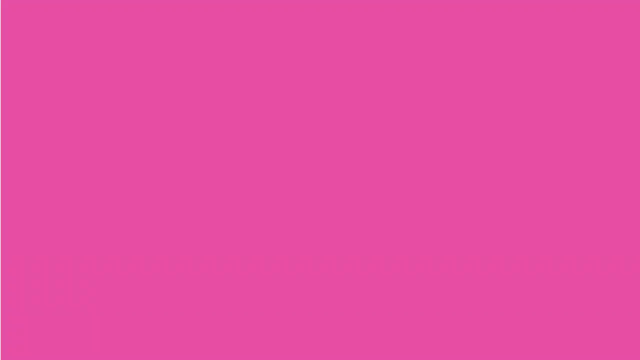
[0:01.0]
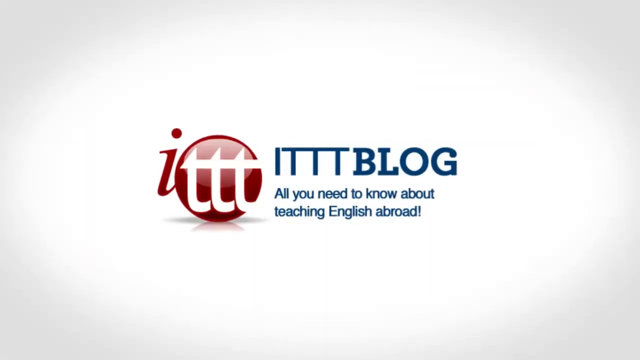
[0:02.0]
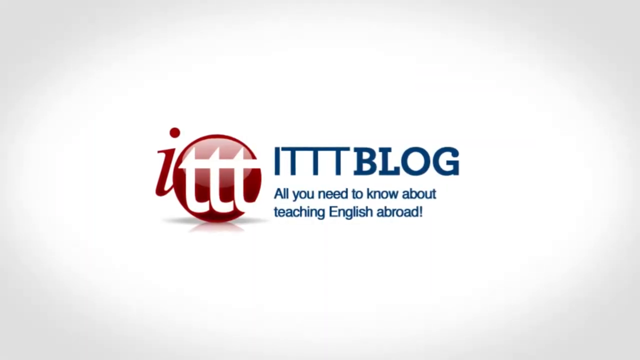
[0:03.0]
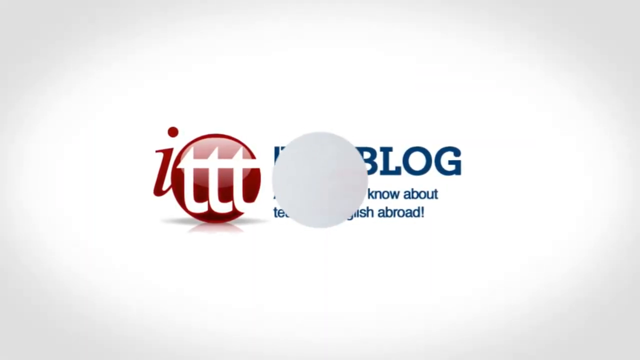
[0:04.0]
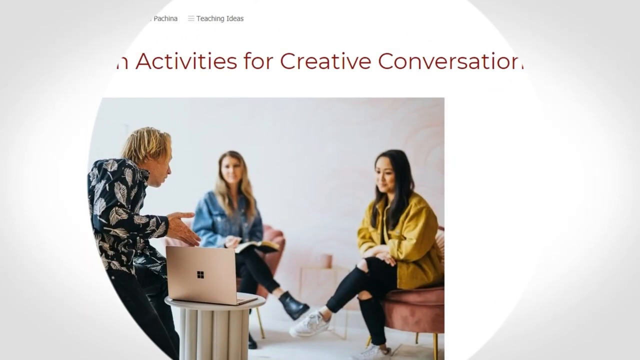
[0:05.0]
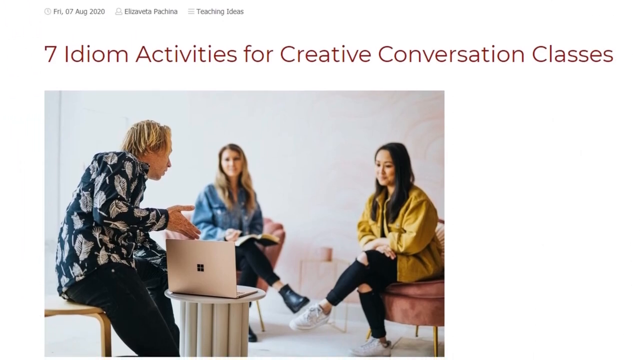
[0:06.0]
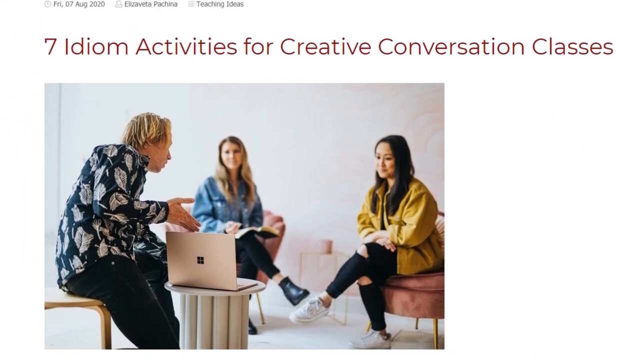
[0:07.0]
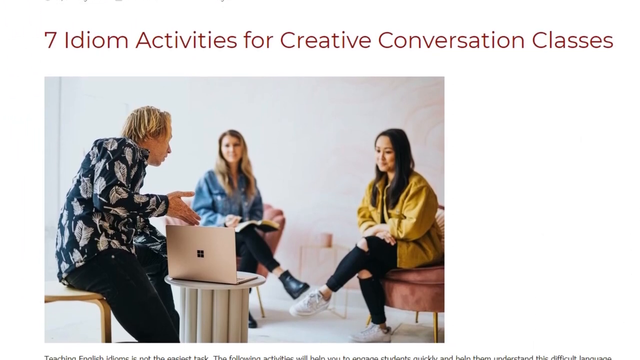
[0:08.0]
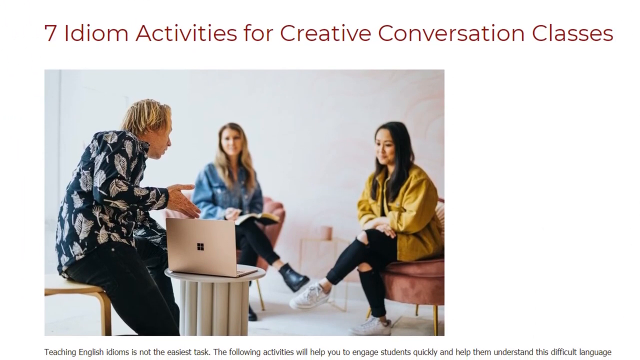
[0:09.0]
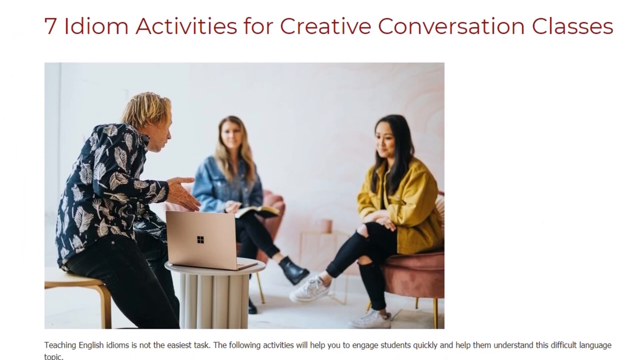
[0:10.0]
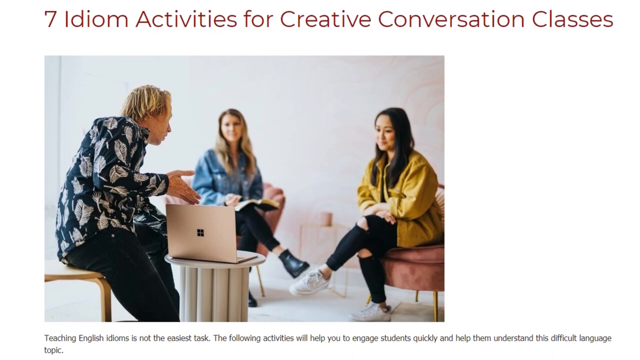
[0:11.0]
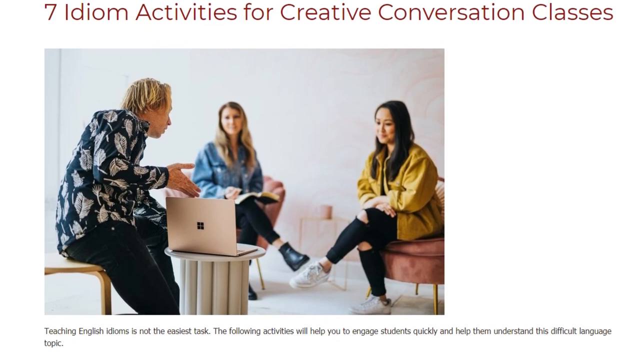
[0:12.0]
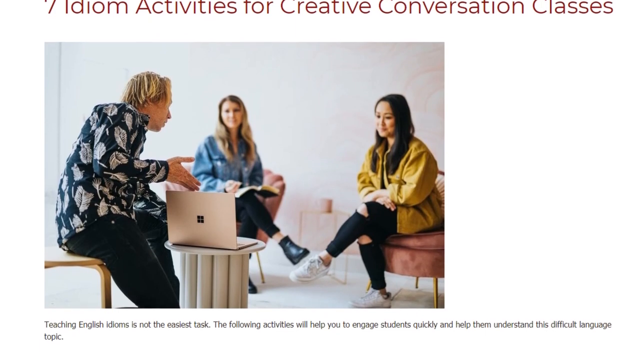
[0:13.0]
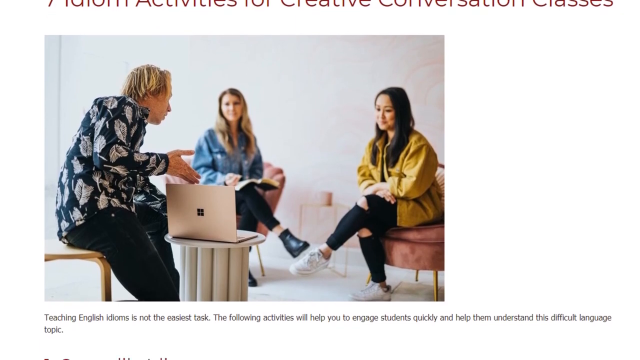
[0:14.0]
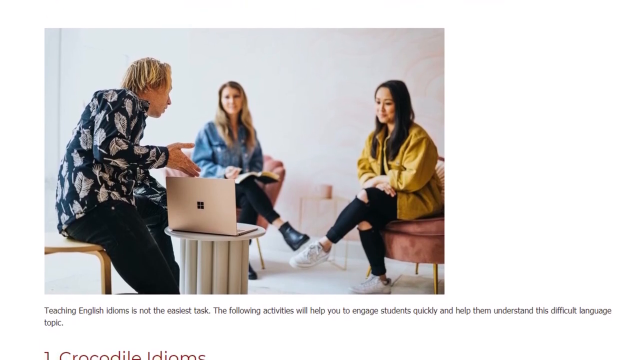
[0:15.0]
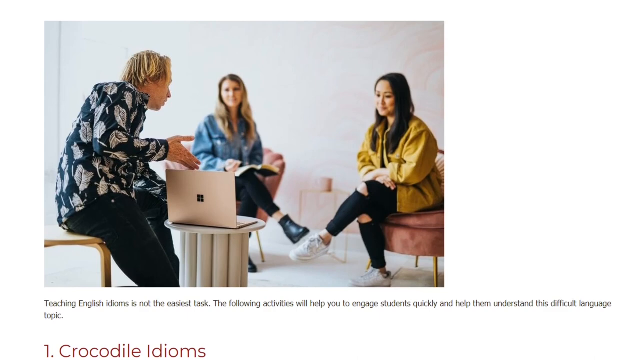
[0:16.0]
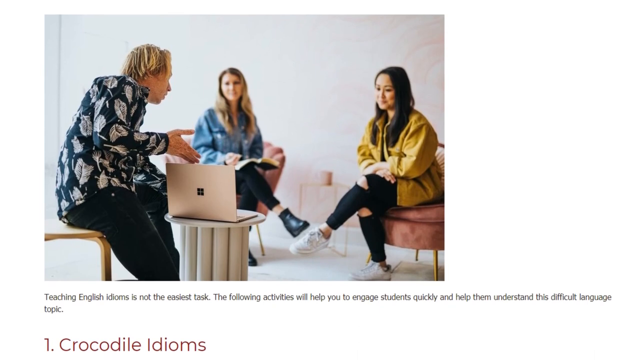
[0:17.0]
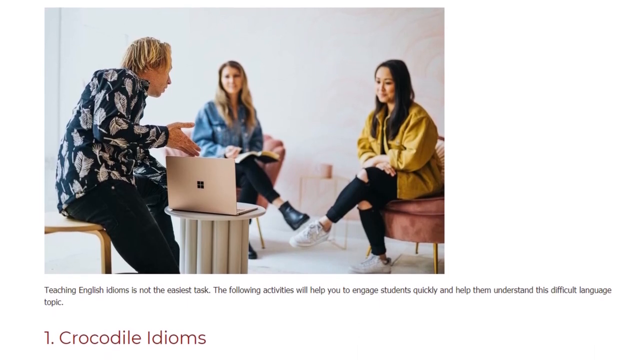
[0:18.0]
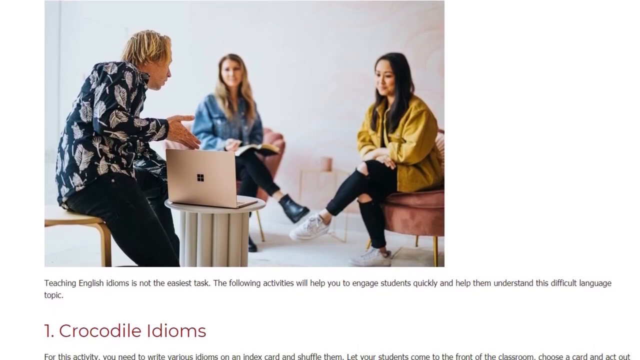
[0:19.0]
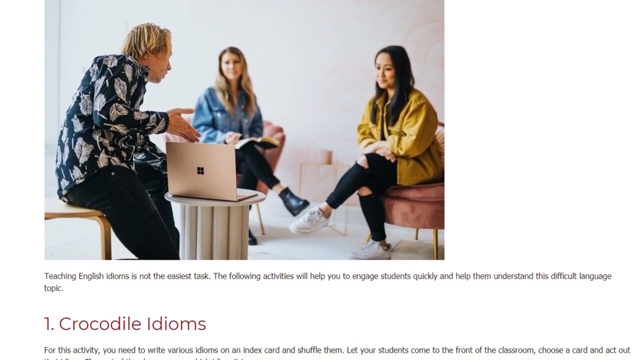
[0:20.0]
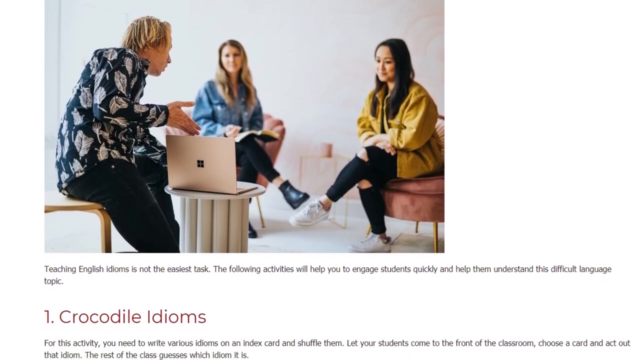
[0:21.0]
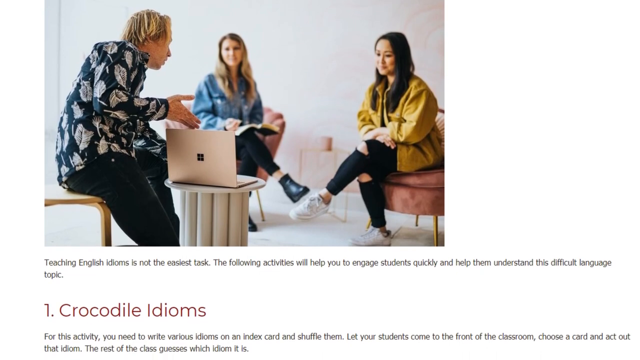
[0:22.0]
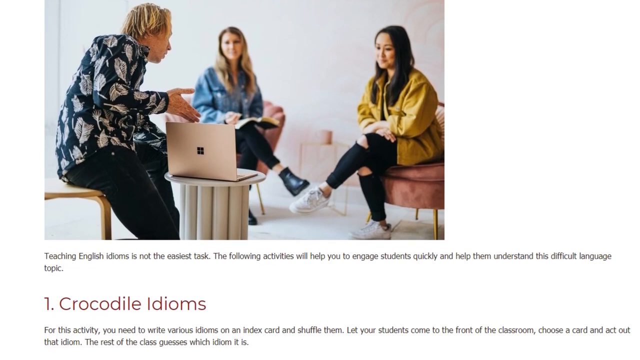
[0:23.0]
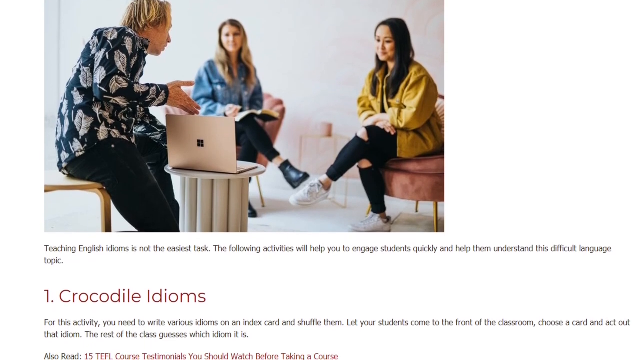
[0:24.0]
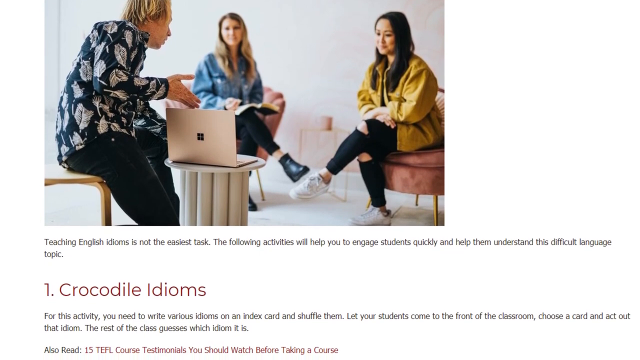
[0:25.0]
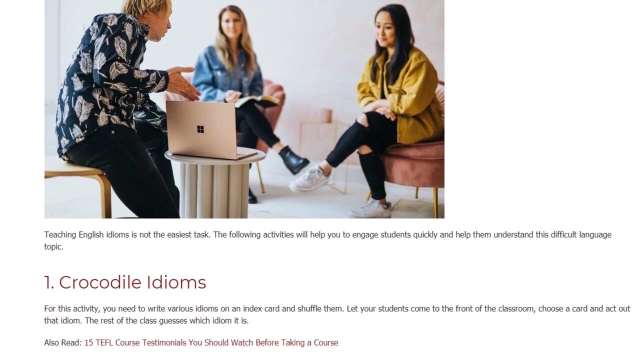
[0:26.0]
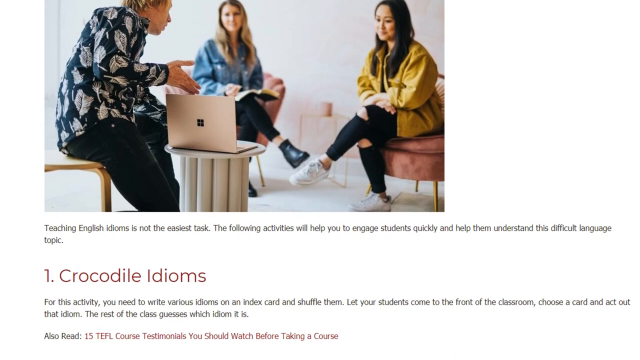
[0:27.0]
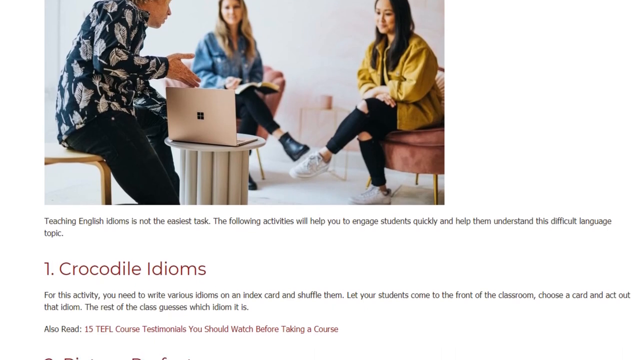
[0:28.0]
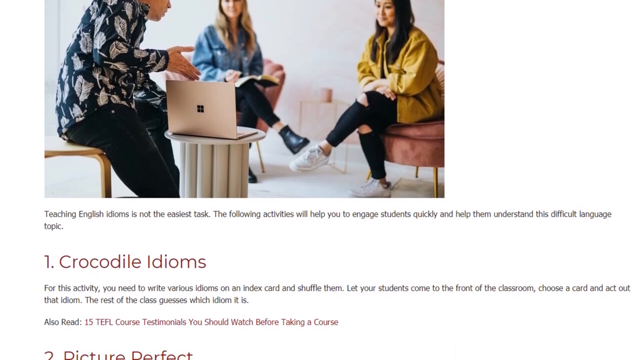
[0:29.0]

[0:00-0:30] The educational video opens with a variety of colors displaying across the screen, followed by the text "ITTT blog, all you need to know about teaching English abroad." To the left is a logo that looks like a circle with three T's on the inside and an I just outside the circle. A new screen then comes up that says "seven idiom activities for creative conversation classes." It shows a man talking to two women; the man has a laptop, sitting on top of a little round table, and he is looking at the two women, who are looking at the laptop. The woman on the right wears a yellow jacket and black pants with holes in the knees. The woman on the left wears a blue shirt, black leotards and black boots, and has a book open in front of her. As the camera pans downward, text at the bottom says "teaching English idioms is not the easiest task. The following activities will help you to engage students quickly and help them understand the difficult language topic." Number one pops up, saying "crocodile idioms," and as the view scans down, more text appears.